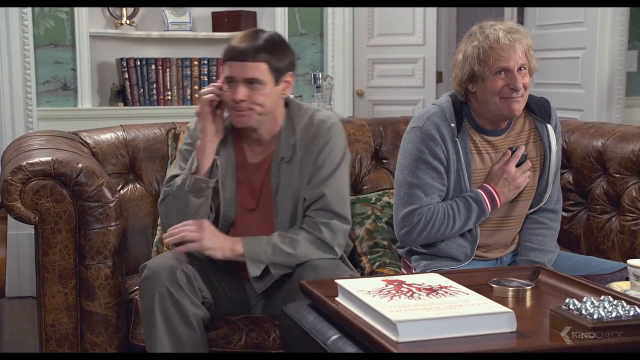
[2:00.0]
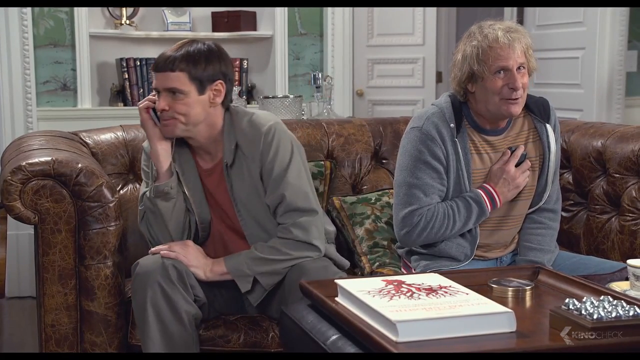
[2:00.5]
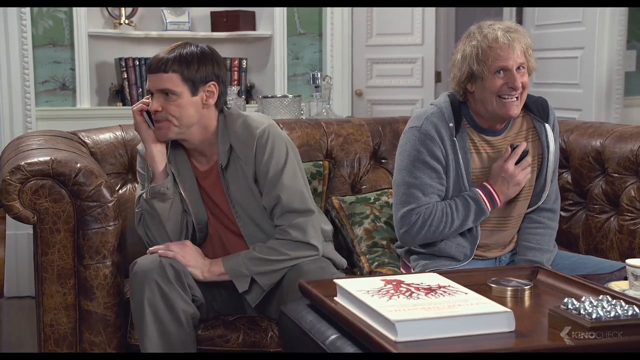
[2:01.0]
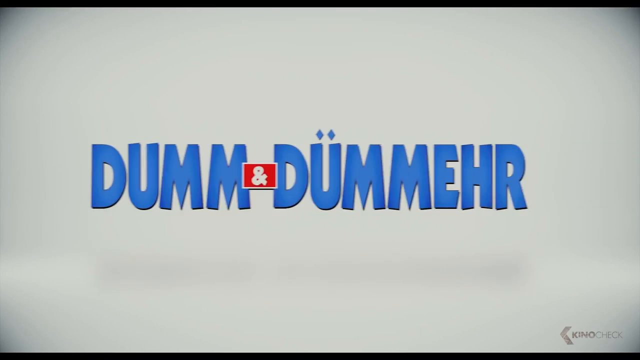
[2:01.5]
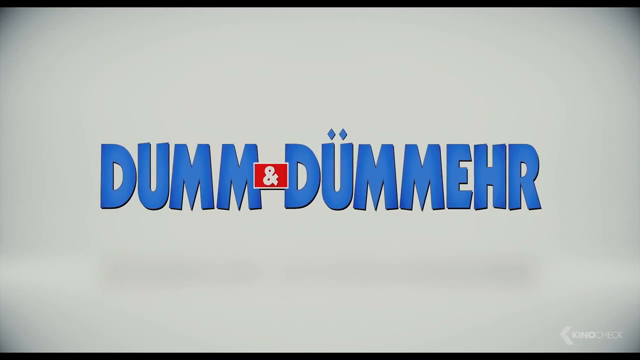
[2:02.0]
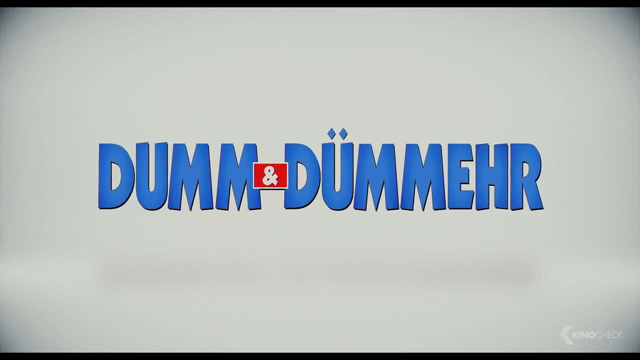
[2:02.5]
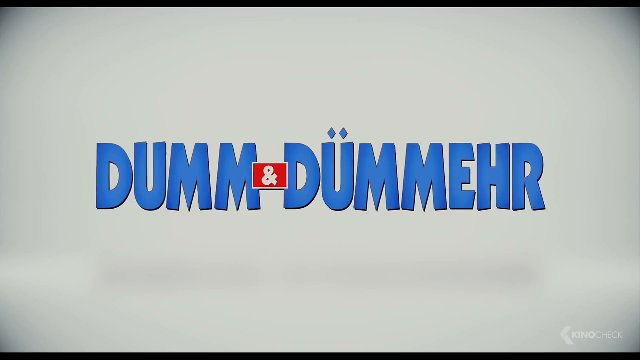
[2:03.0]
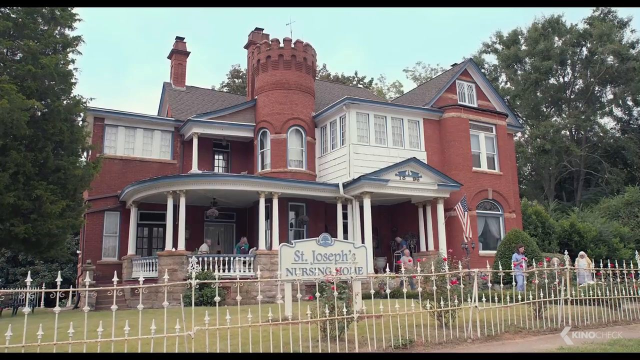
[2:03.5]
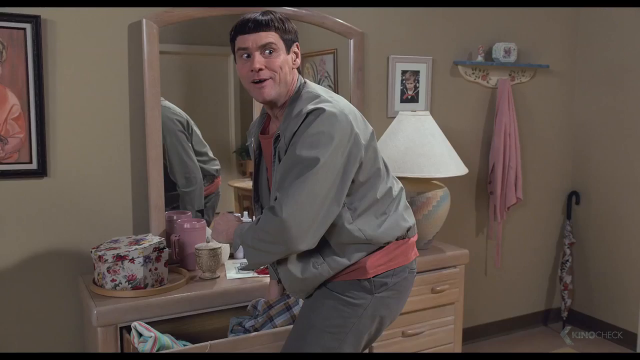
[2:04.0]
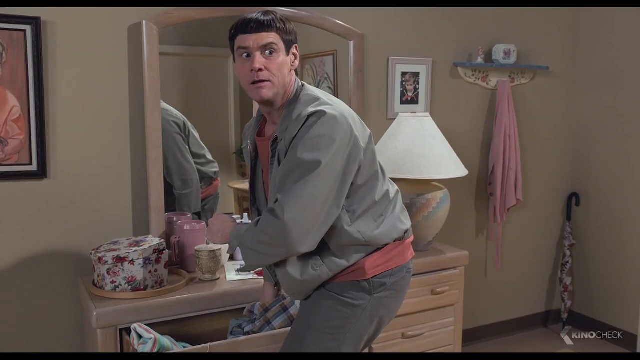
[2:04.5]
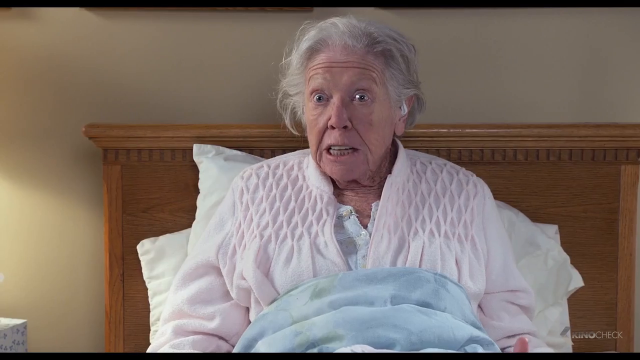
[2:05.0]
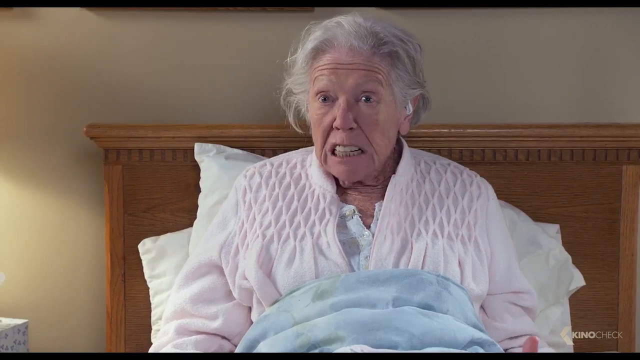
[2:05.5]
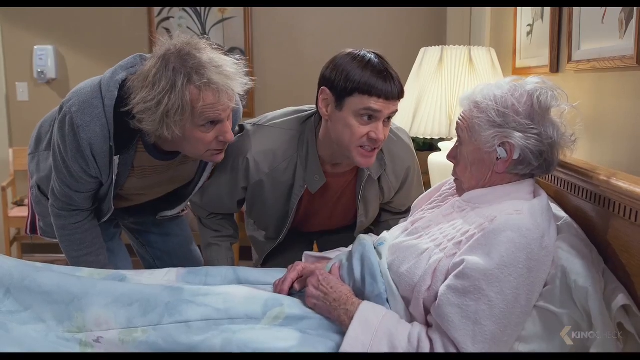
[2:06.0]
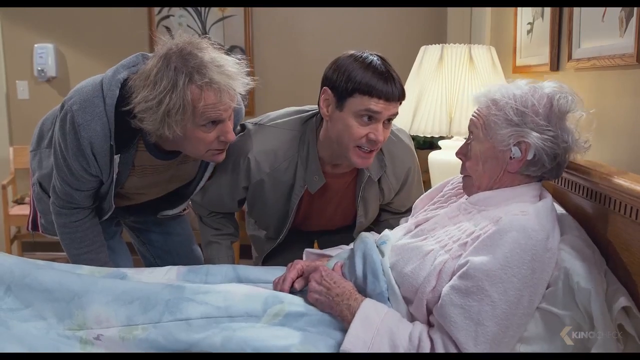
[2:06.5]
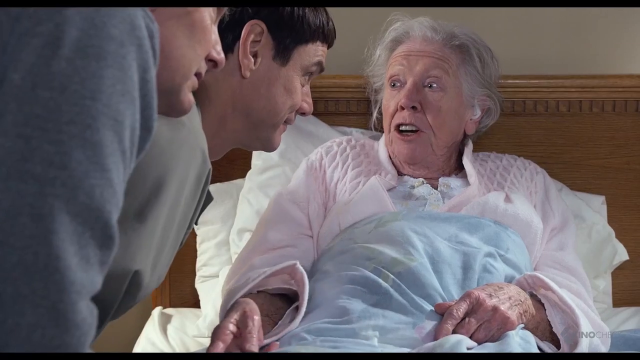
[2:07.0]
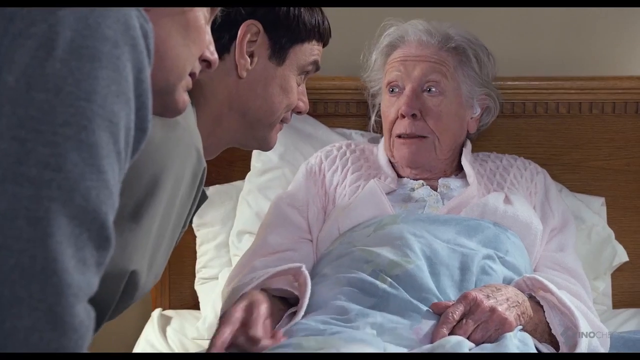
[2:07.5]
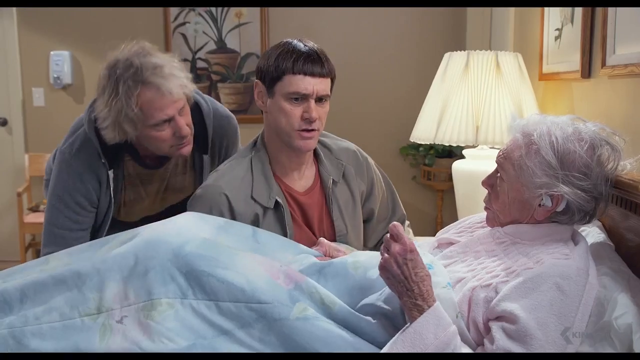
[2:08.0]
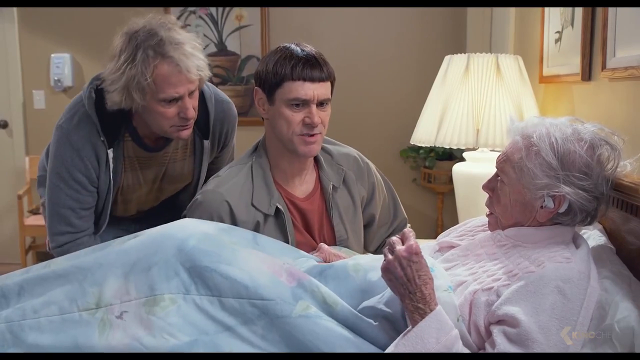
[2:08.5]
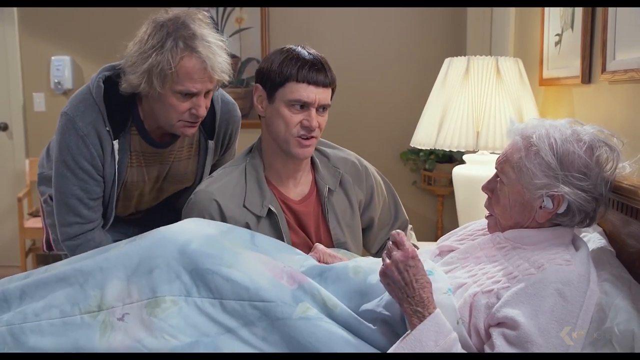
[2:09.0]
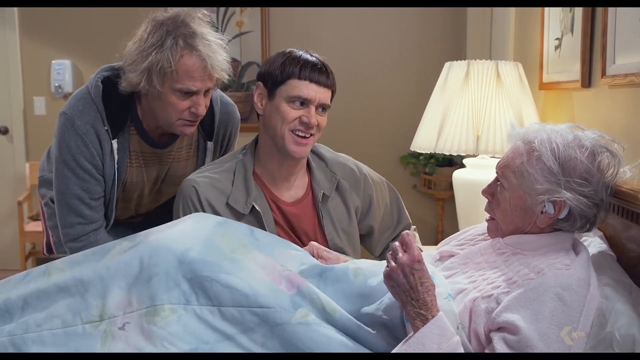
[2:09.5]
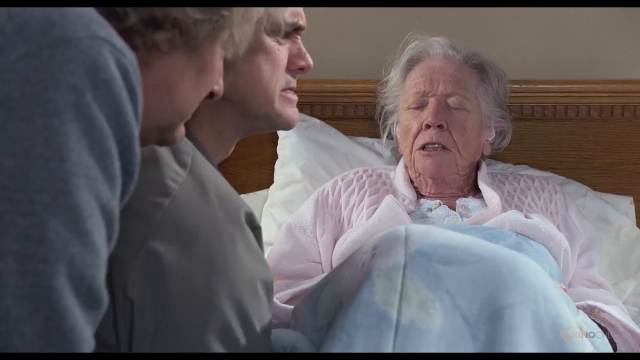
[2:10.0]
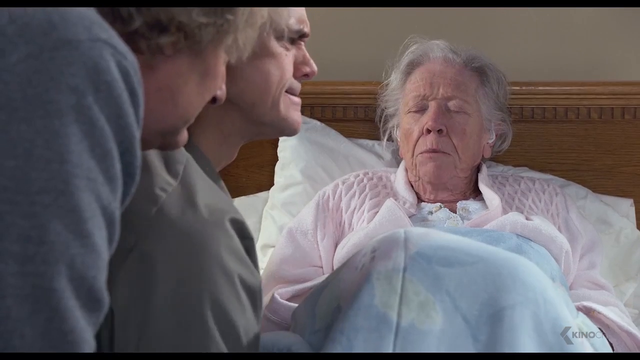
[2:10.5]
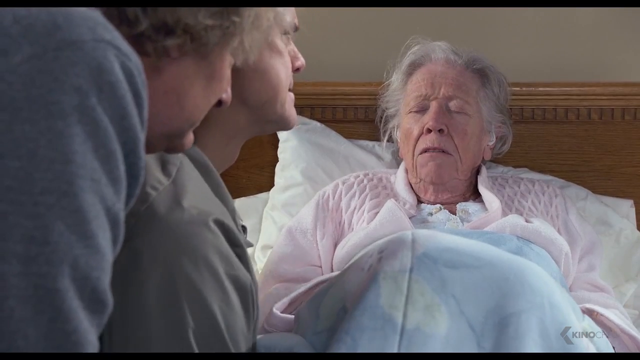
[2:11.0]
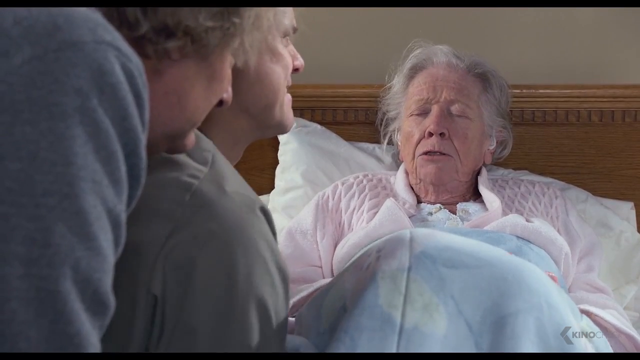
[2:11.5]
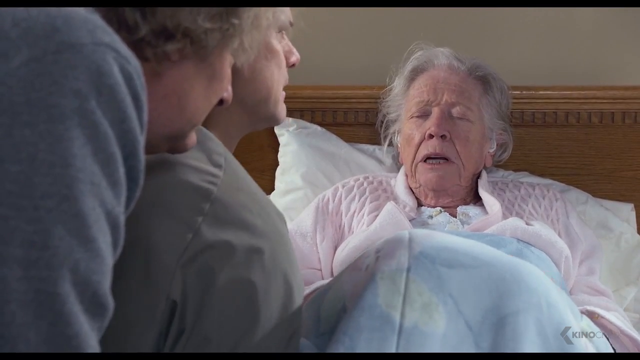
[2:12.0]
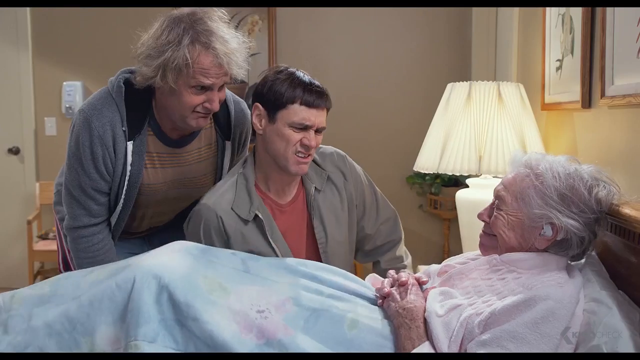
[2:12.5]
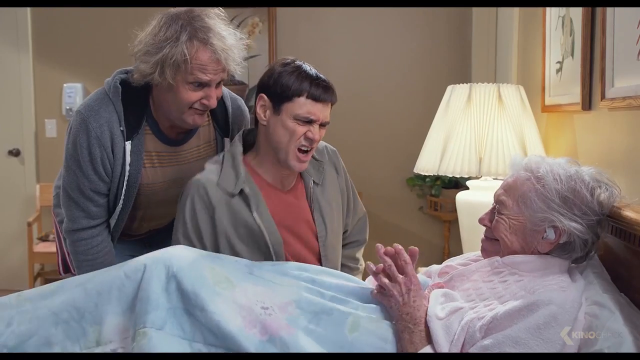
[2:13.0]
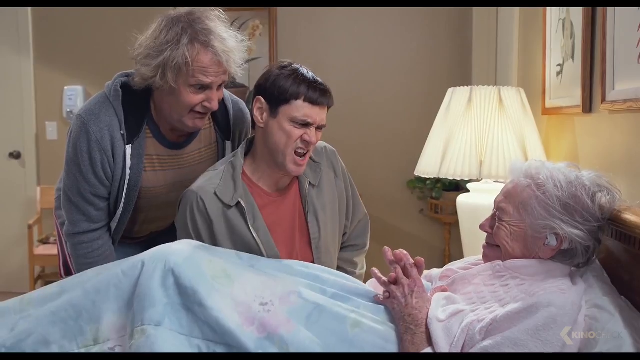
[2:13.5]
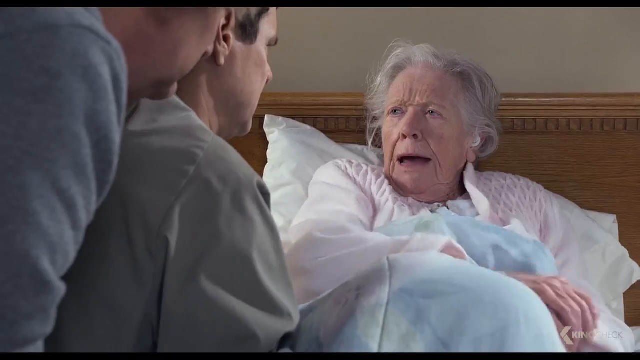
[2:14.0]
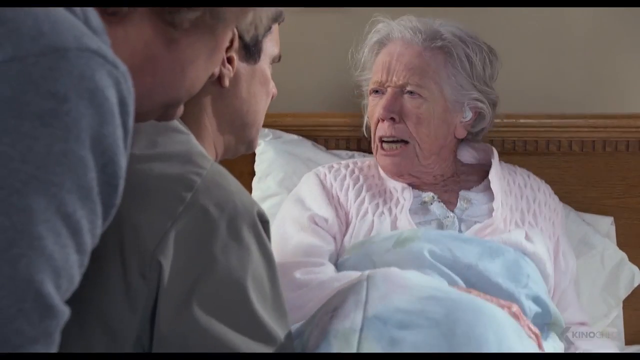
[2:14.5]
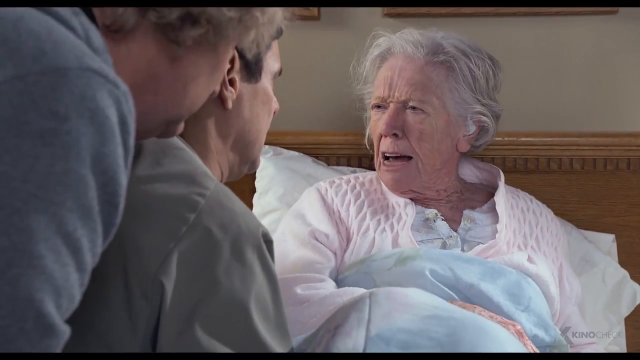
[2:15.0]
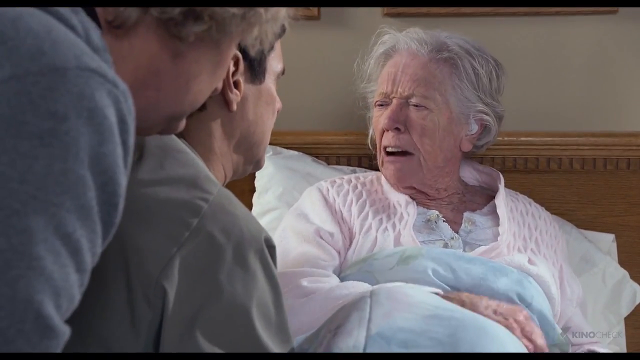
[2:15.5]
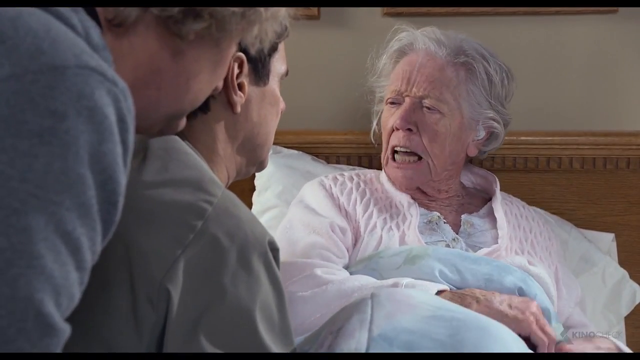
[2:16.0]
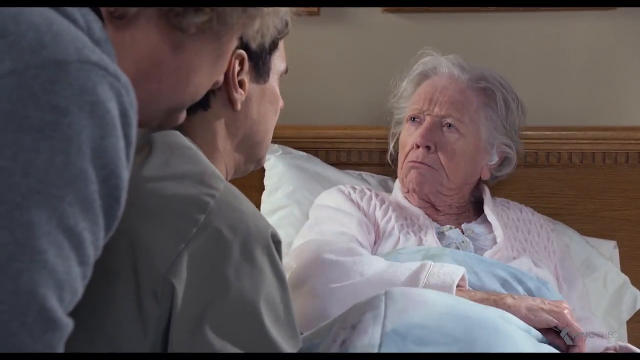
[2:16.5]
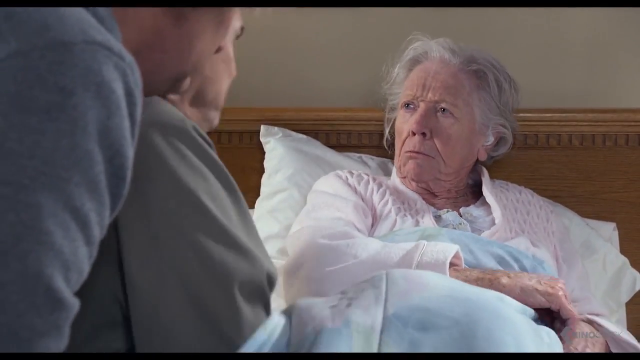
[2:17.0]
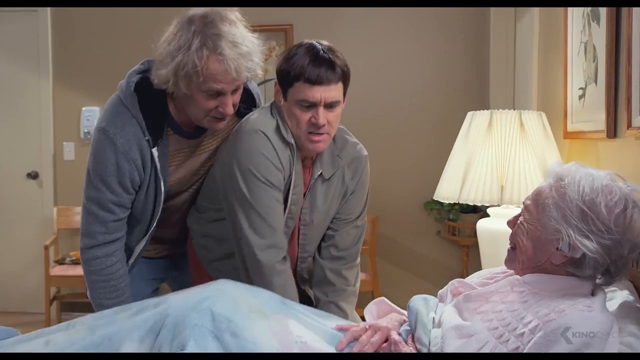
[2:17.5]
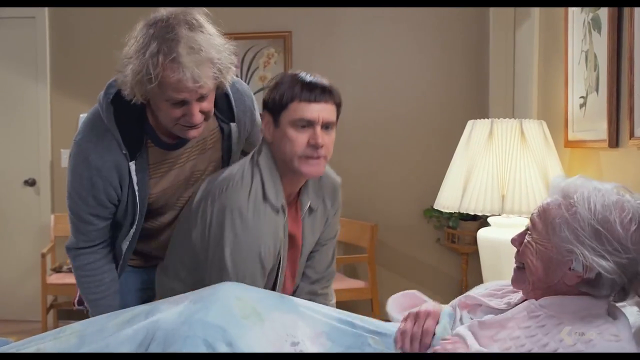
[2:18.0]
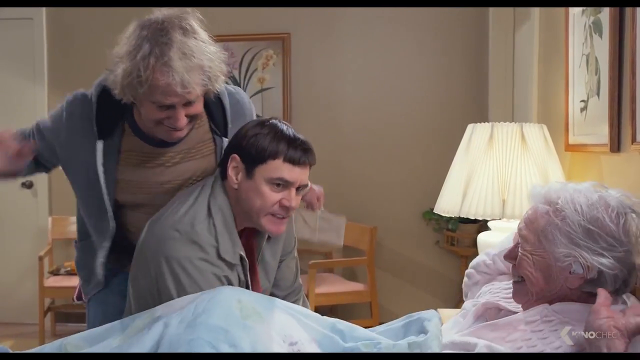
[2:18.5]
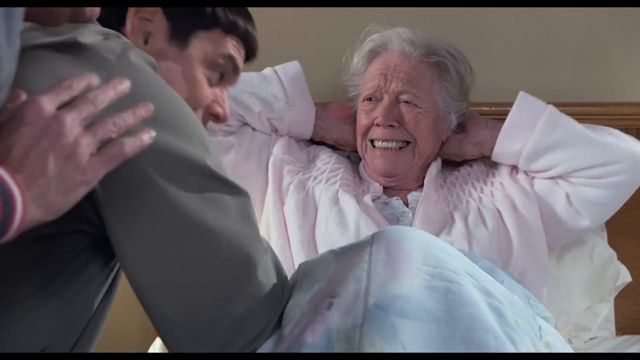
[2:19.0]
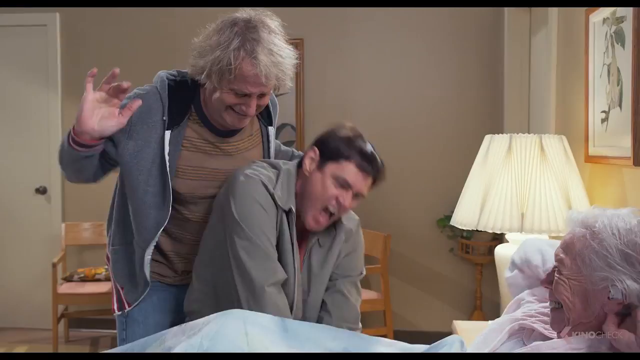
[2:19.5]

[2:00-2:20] The two men keep talking to each other on cell phones, acting as though they are on a very important call even though they are just talking to each other in the presence of other people. The movie title, Dumb and Dumber, then appears, with "Dumb" spelled D-U-M-M, apparently in German. The scene then cuts to some sort of retirement home, where the two men talk to an older lady; they do something very not good to her and have a very expressive conversation, seemingly not a good experience.